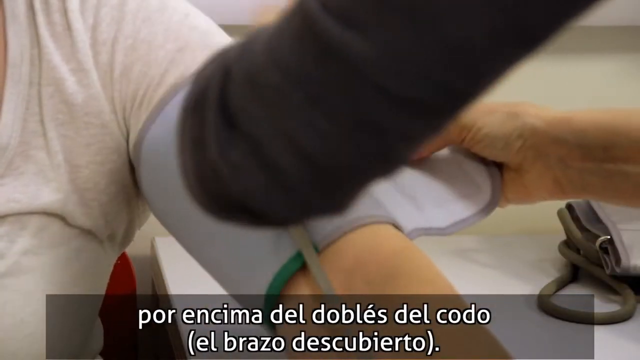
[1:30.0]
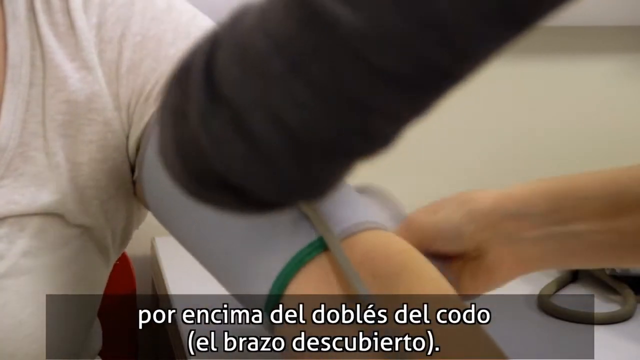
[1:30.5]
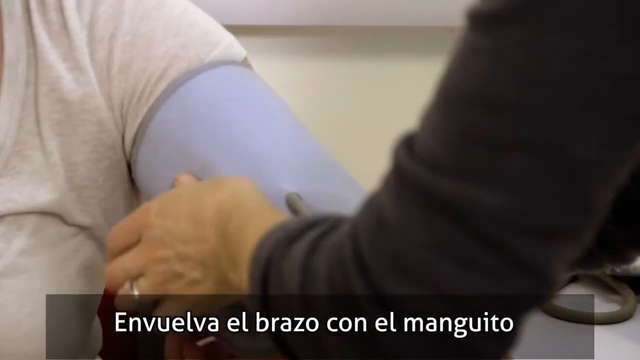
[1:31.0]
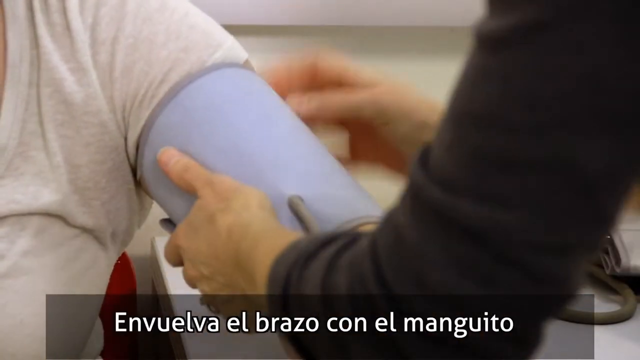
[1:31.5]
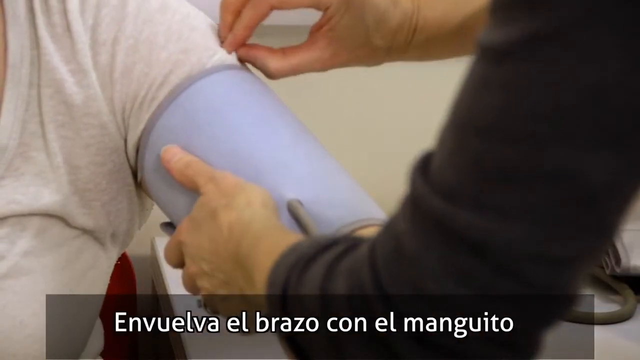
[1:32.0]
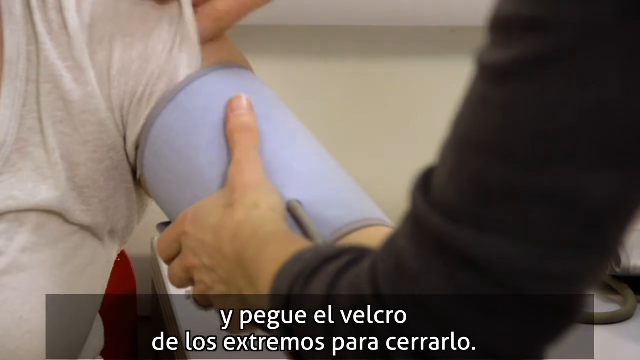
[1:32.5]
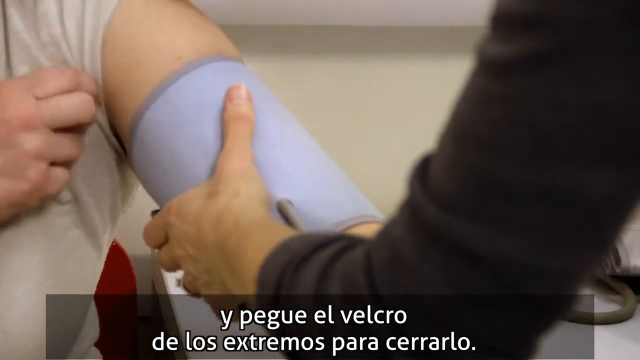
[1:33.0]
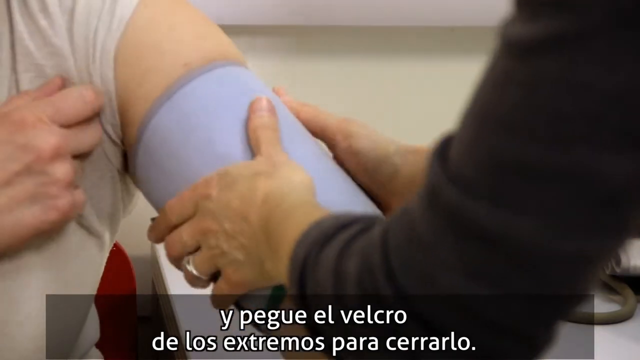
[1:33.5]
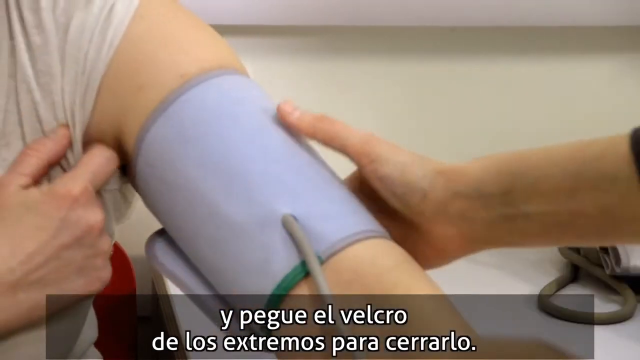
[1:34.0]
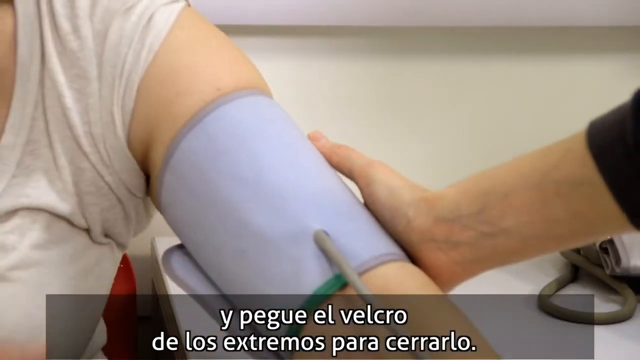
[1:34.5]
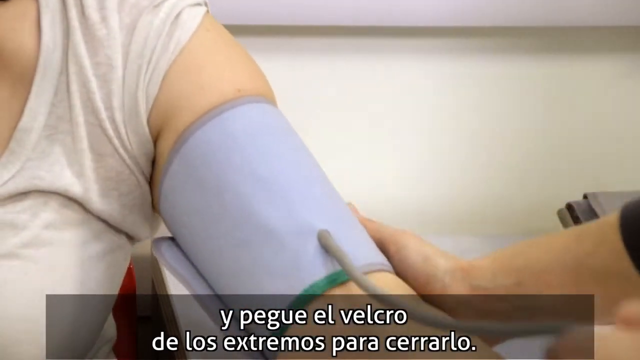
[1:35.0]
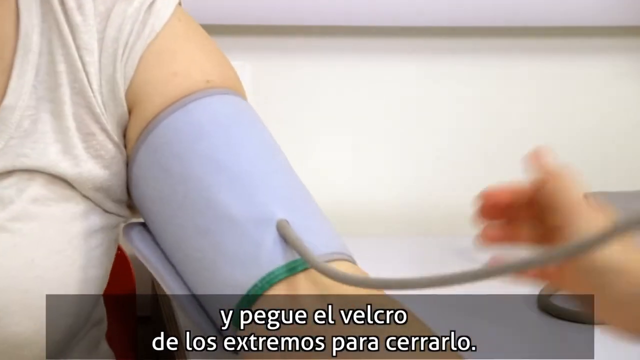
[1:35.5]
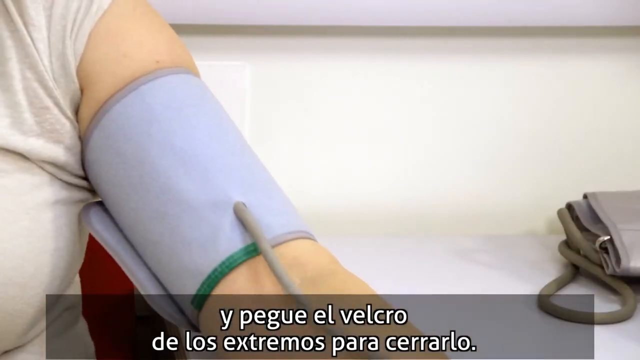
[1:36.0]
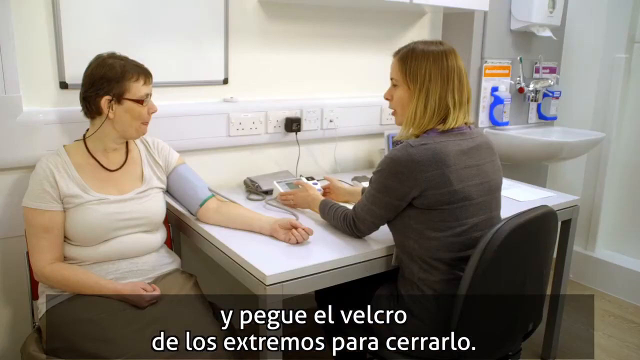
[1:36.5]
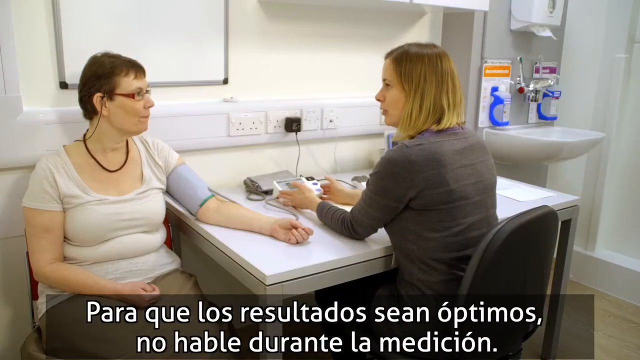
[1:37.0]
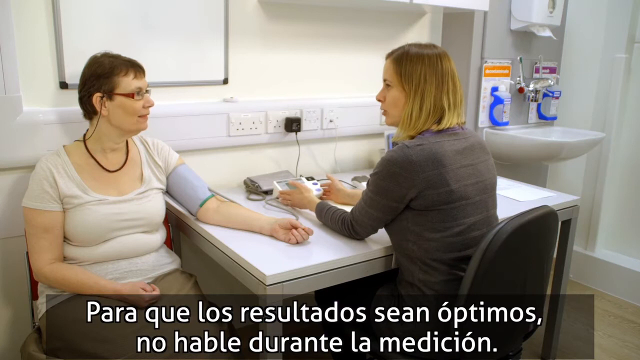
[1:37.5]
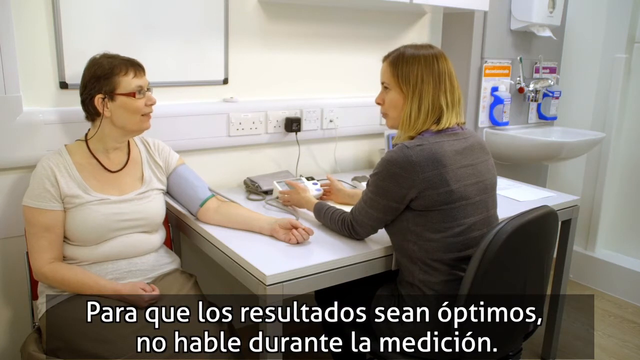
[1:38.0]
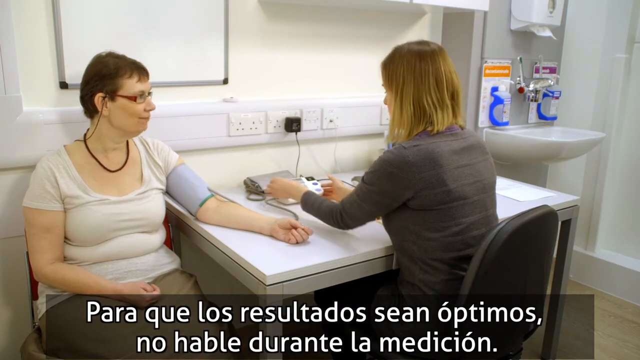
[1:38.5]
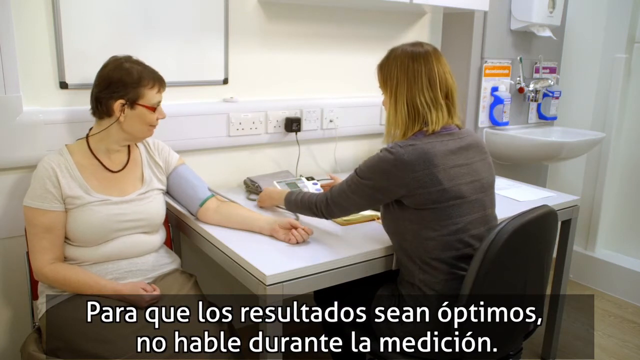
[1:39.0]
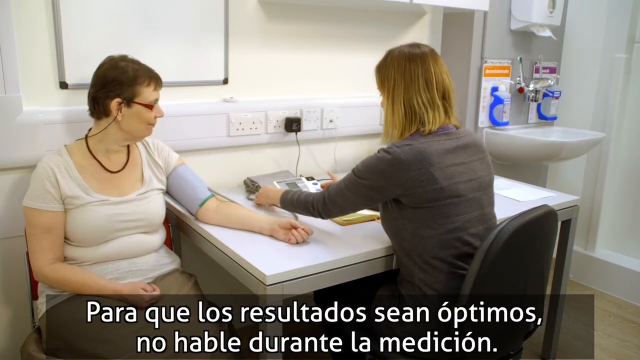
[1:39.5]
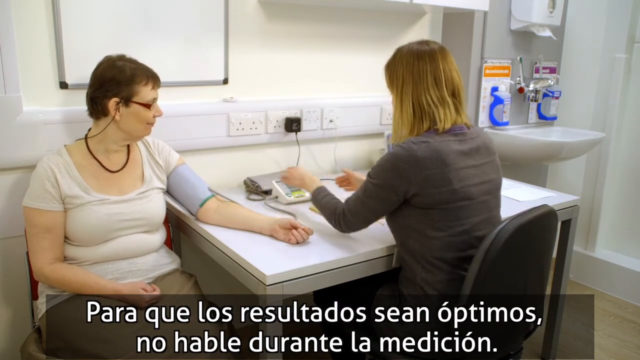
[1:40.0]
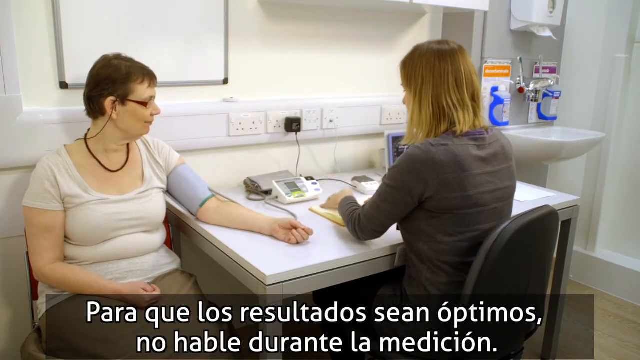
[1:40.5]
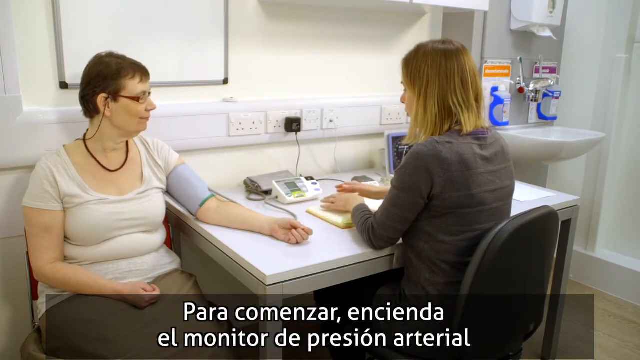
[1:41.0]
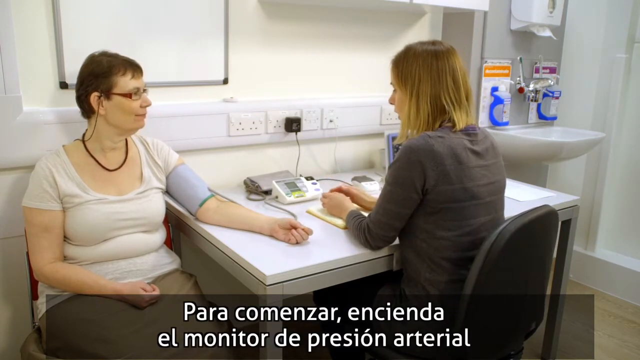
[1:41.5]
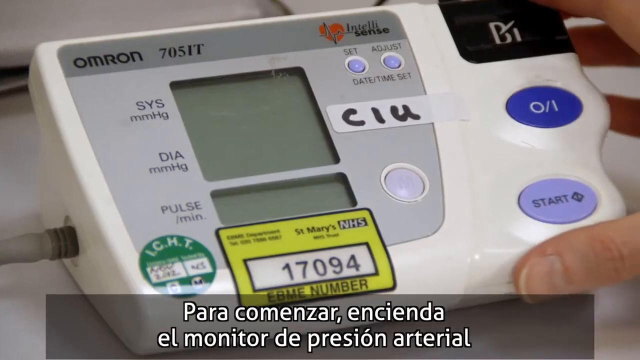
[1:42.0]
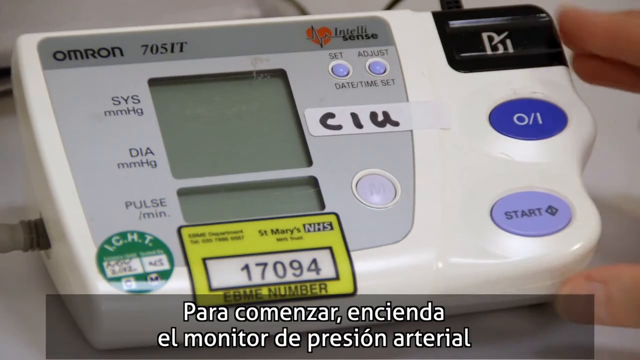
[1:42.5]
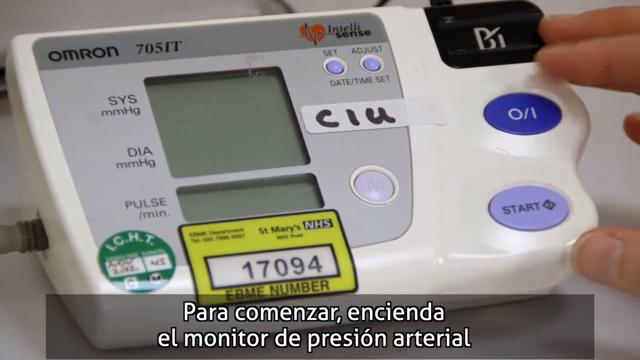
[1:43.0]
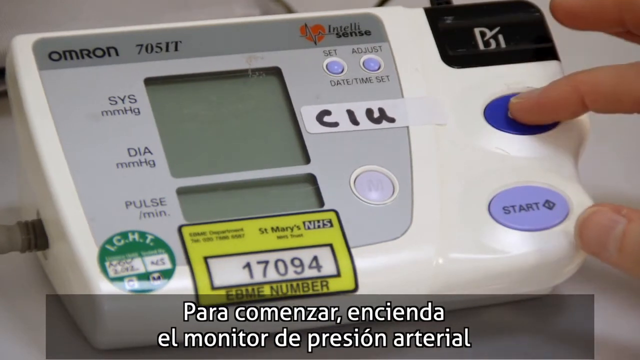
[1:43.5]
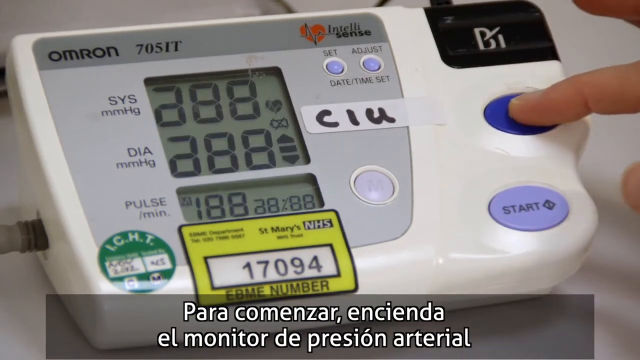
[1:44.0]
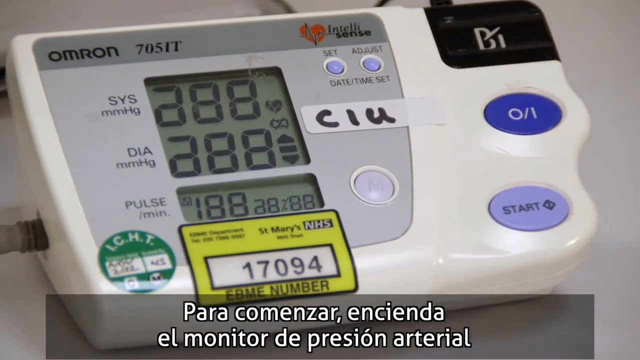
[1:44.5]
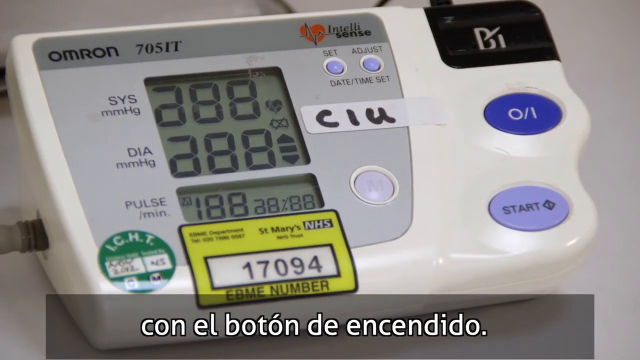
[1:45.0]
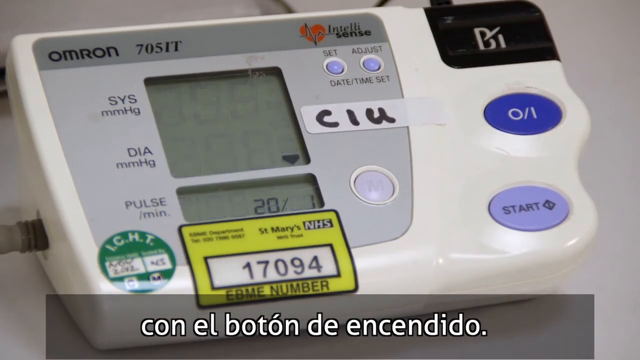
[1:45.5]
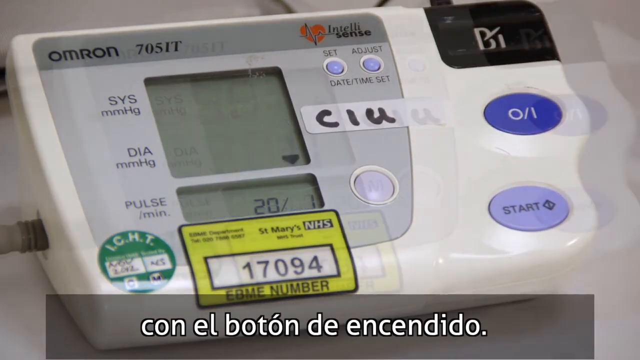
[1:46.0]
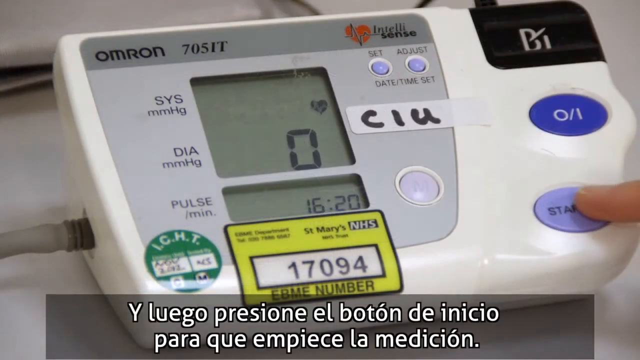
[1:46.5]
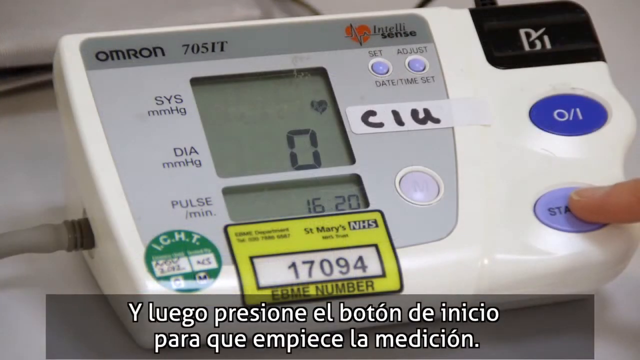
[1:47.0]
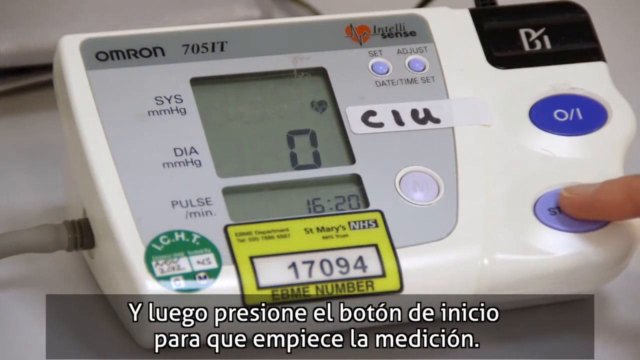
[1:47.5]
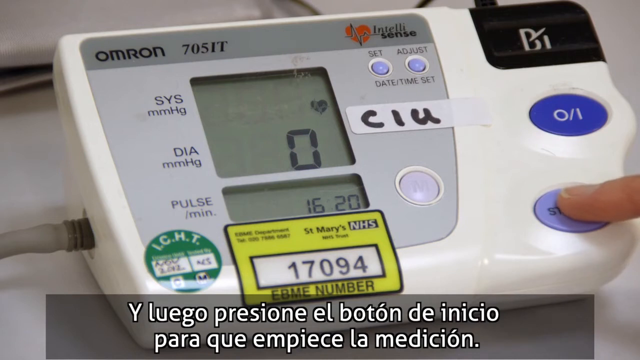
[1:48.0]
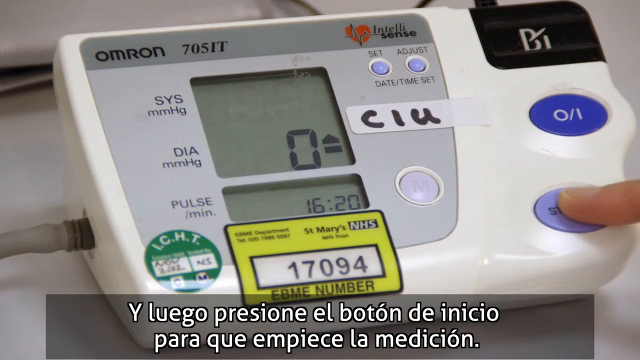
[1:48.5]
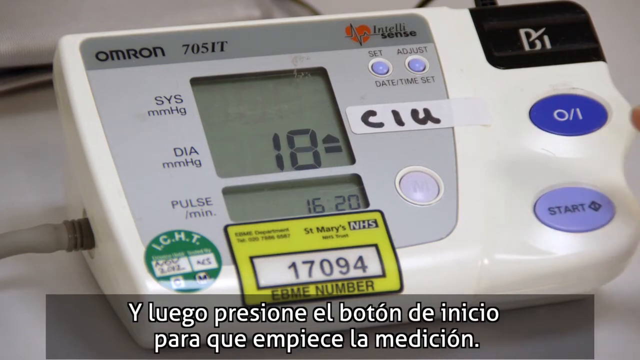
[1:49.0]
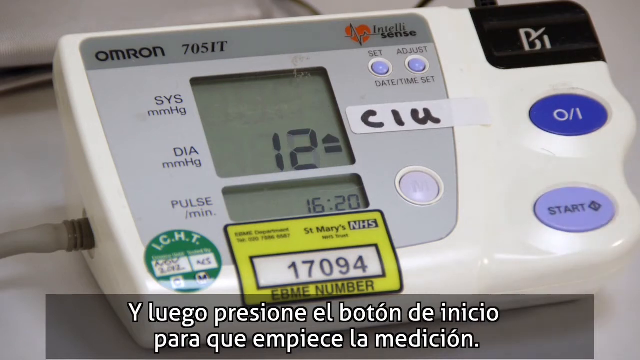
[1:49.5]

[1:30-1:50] A woman gets a blood pressure cuff put on her arm, with a gray tube coming out of the cuff. The cuff is a light bluish gray color. A finger pushes a button to reset the monitor and then pushes the start button. Two women are present: one having her blood pressure taken, and the other, apparently a doctor or nurse, doing the monitoring in her office. The woman being measured wears a light whitish gray shirt and rests her arm on what is kind of like a white desk in the background. The woman taking the blood pressure wears a dark long-sleeved shirt.